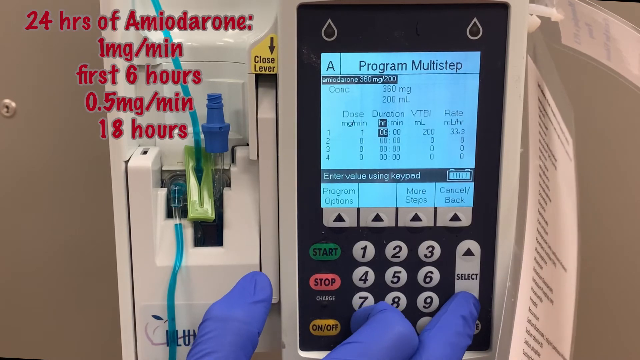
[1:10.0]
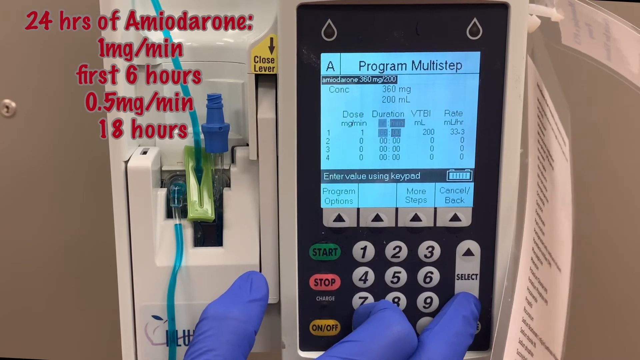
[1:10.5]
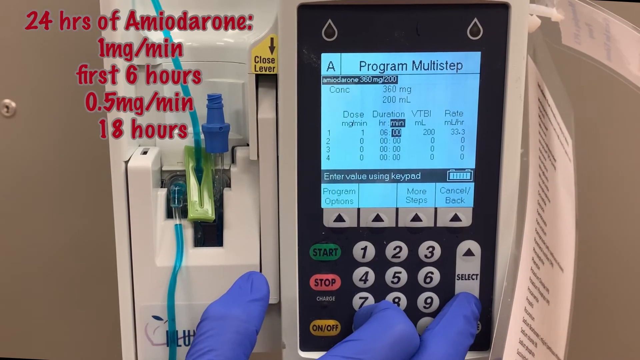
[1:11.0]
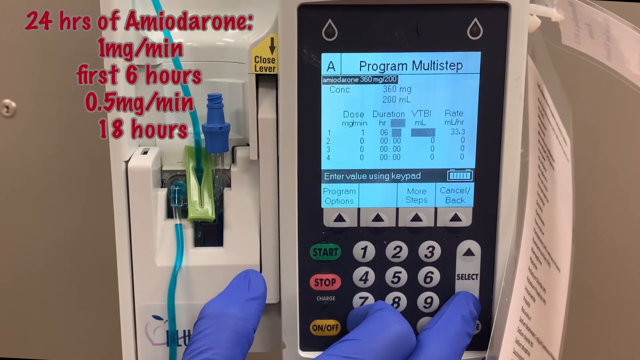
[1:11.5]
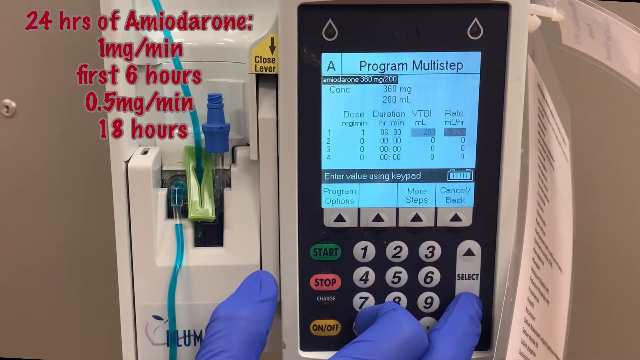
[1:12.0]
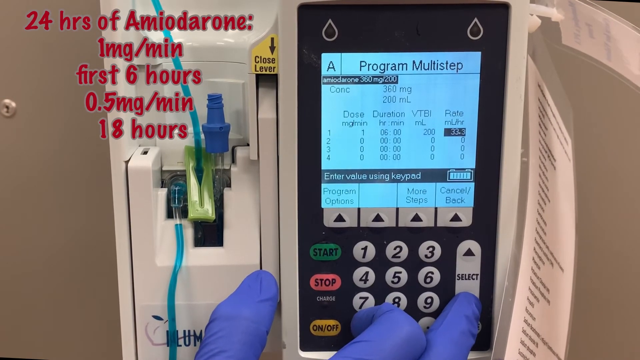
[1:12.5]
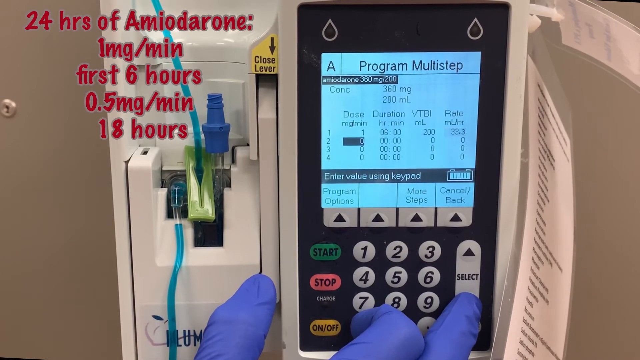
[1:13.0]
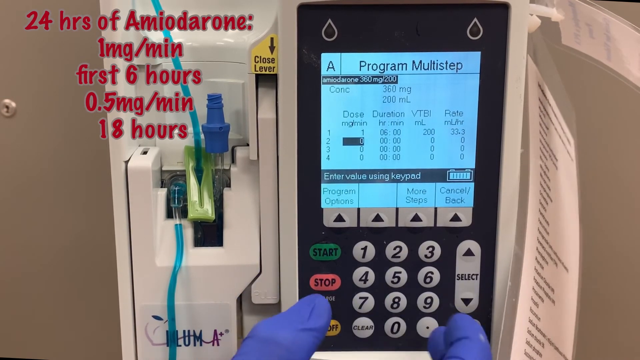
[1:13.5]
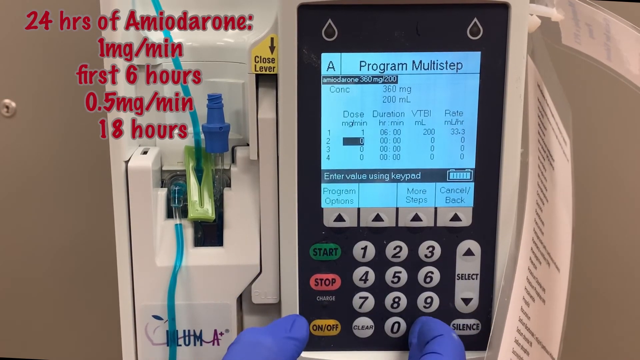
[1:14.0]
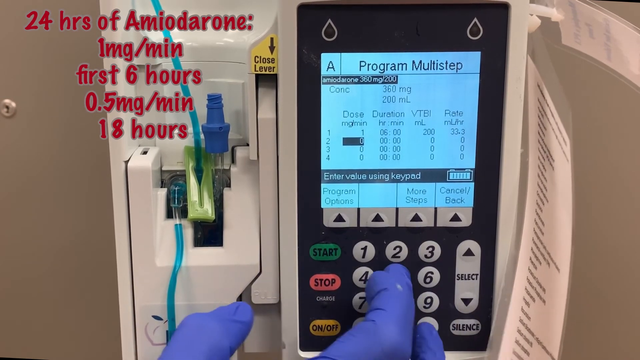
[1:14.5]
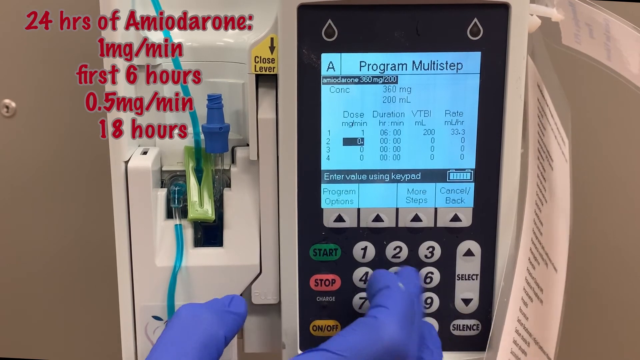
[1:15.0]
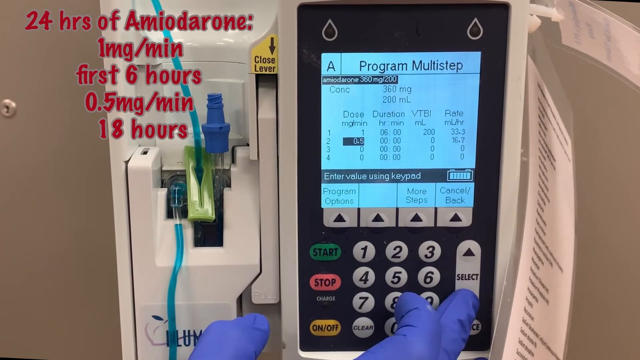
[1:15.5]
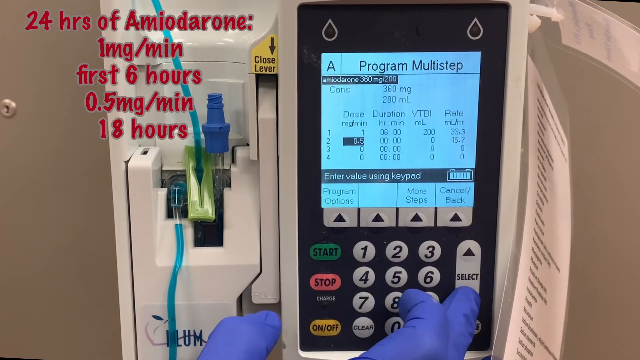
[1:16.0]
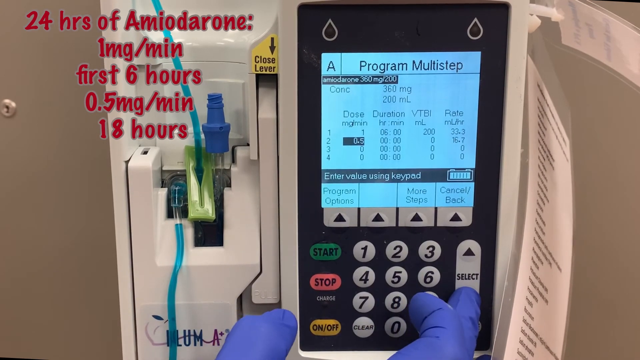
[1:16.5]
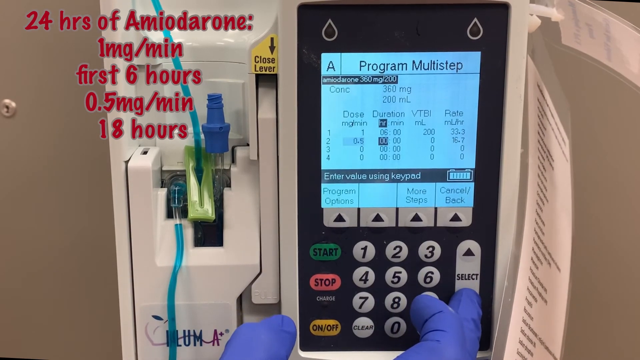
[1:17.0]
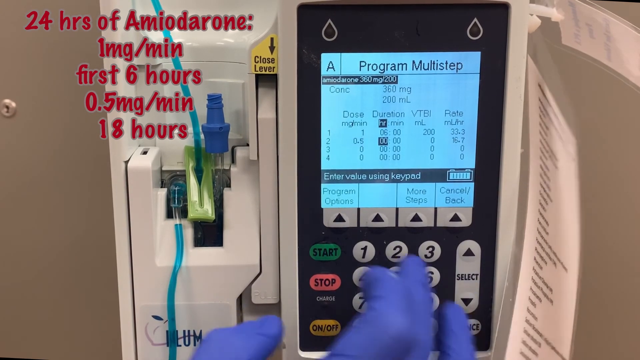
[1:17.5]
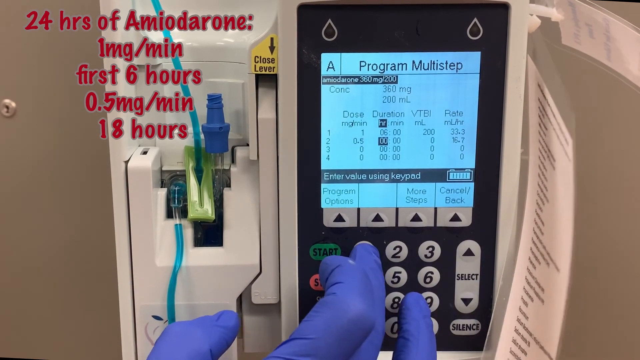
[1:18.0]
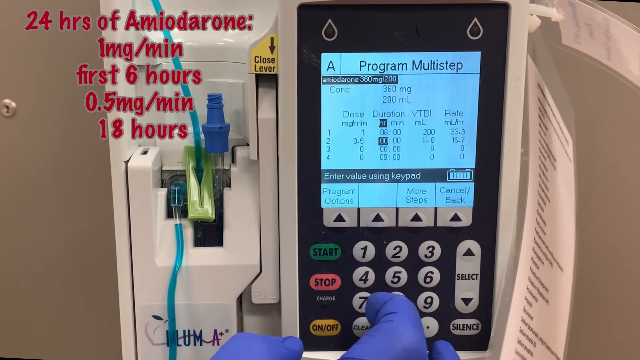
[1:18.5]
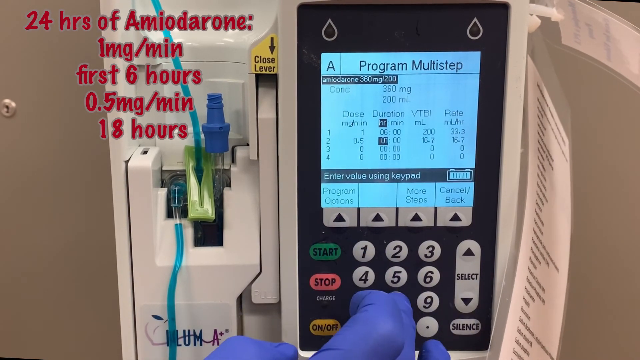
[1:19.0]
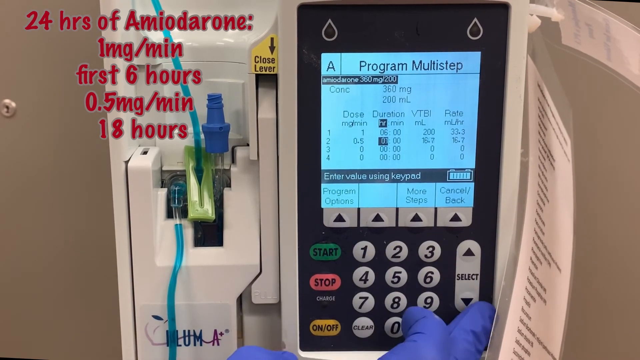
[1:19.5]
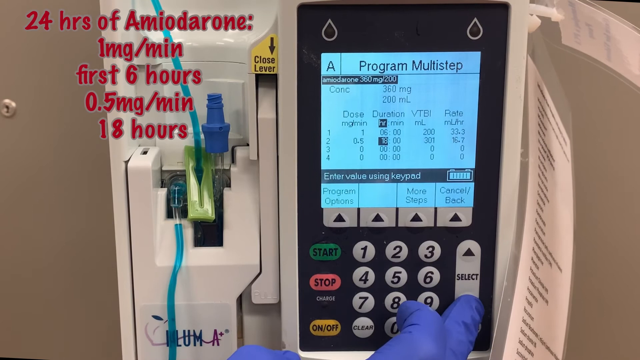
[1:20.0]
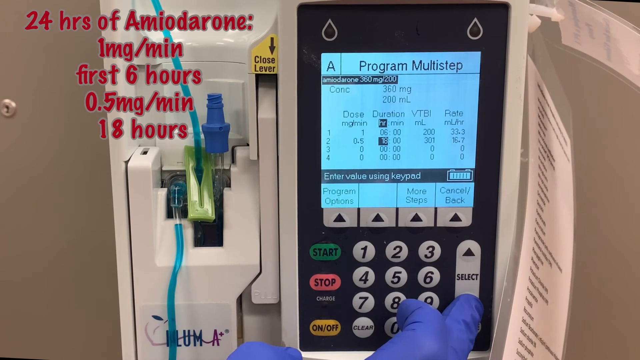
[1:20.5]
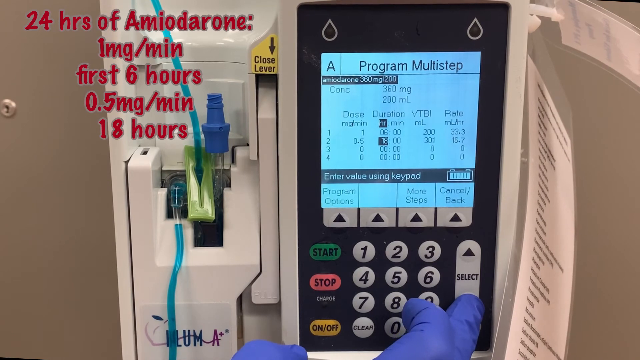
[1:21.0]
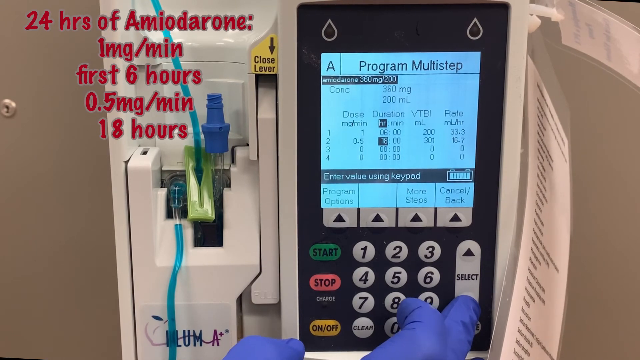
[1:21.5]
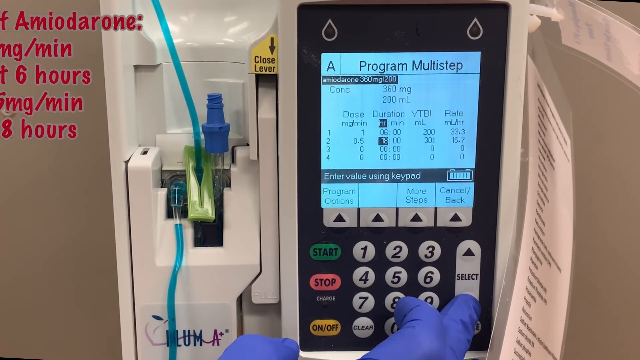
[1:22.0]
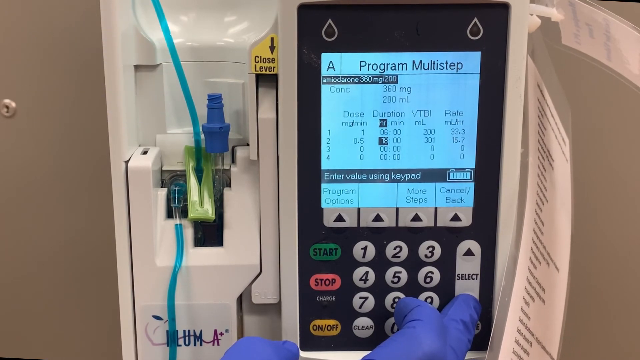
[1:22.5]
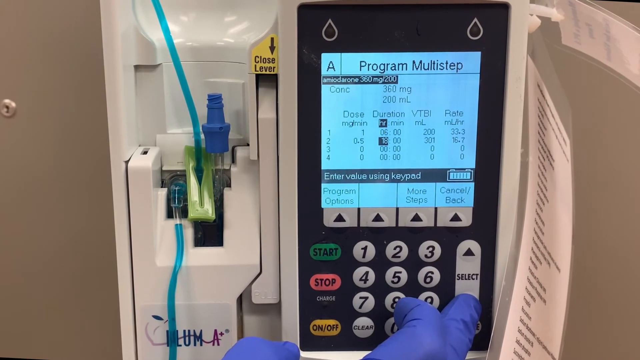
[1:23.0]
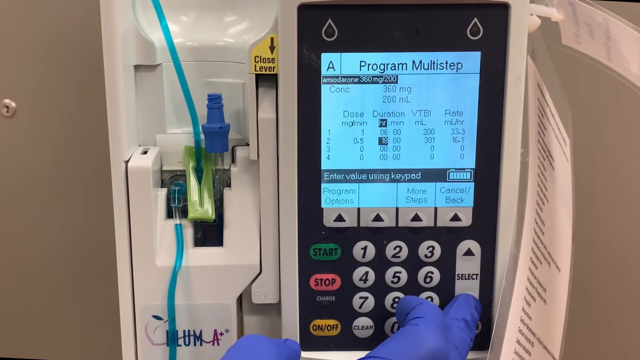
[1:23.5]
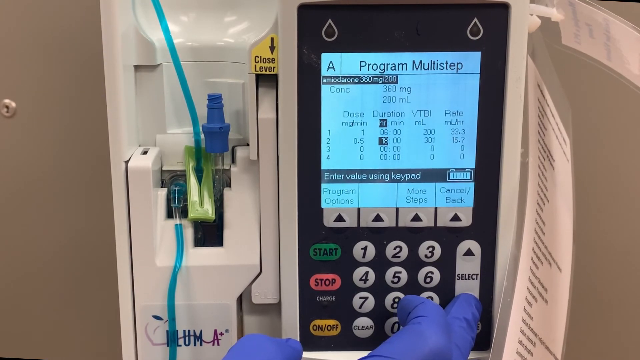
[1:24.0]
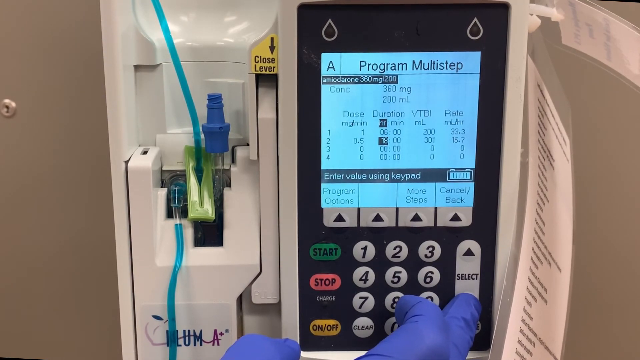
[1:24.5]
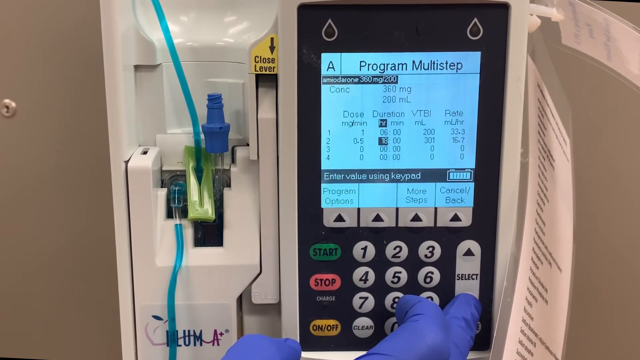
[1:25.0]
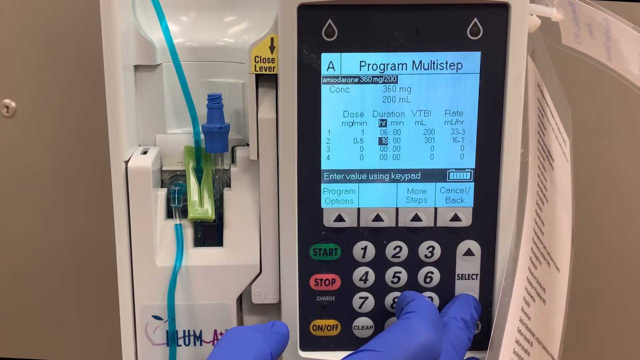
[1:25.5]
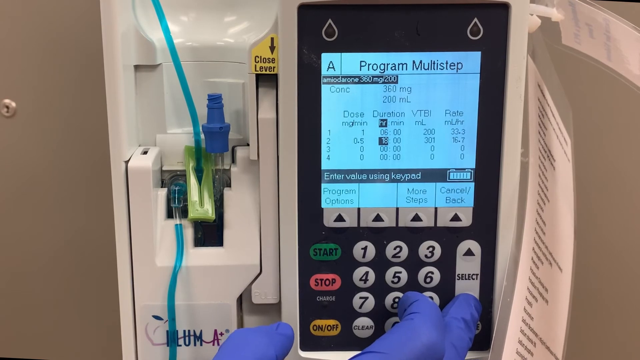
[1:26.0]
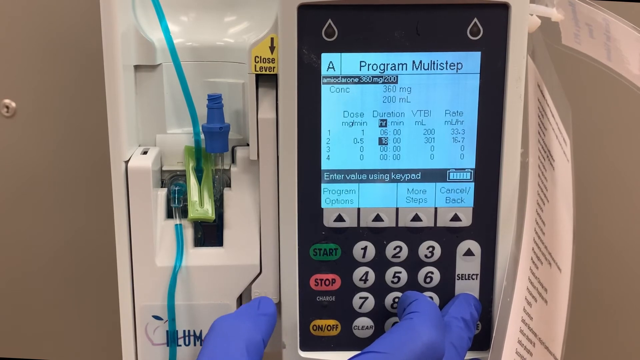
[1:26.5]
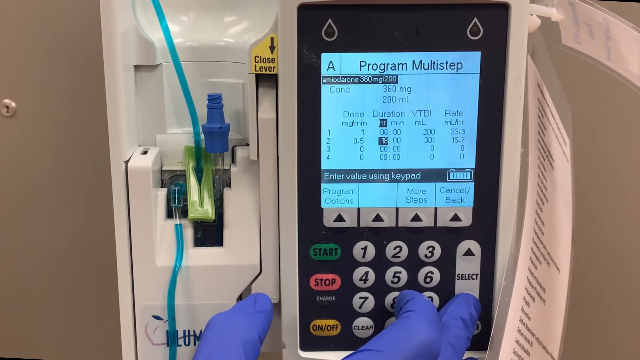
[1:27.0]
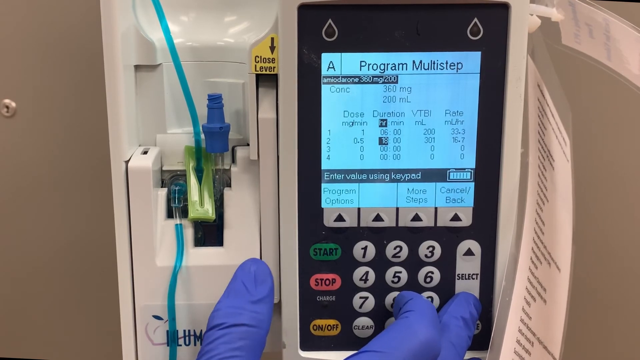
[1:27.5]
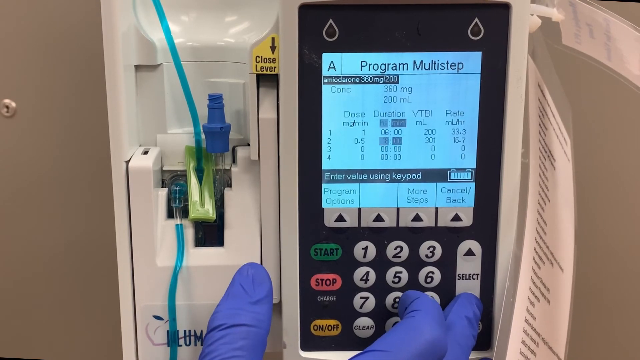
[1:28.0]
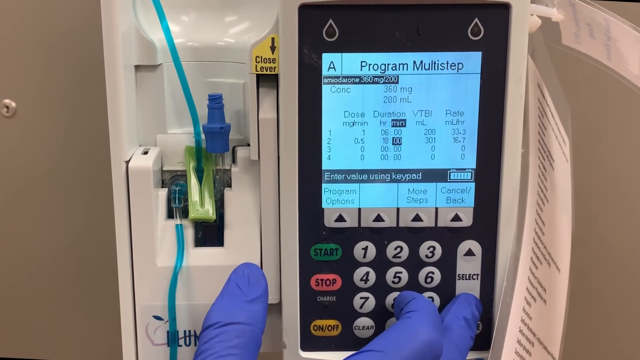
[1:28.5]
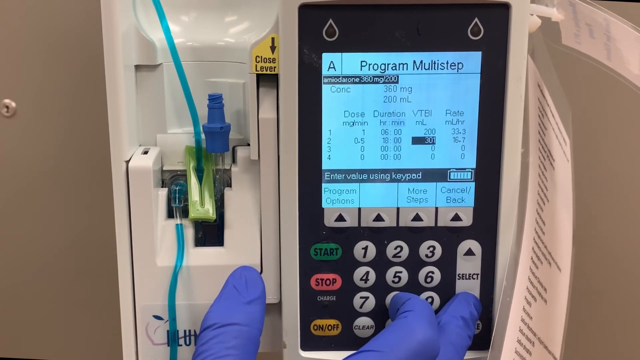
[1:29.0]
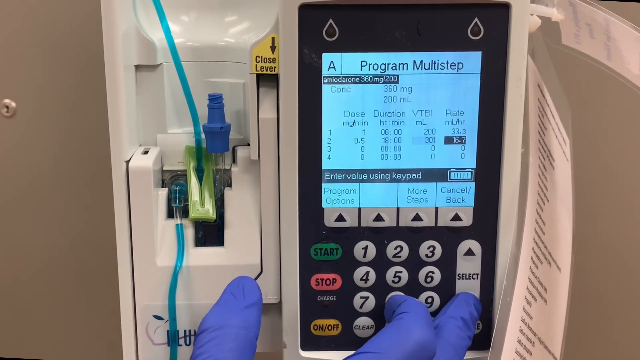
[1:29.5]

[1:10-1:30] The first step is already programmed at one mg per minute for a six-hour duration, set to deliver 200 milliliters at a rate of 33.3 milliliters per hour. The professional quickly moves down to the second slot, presses the 0 and the 0.5 buttons for 0.5 milligrams per minute, then moves over and programs 18 hours into the hours-and-minutes duration field. The screen then shows the programmed setup: one mg per minute for six hours at 200 milliliters VTBI at 33.3 milliliters per hour, and 0.5 mg per minute with 301 milliliters VTBI at a rate of 16.7 milliliters per hour.